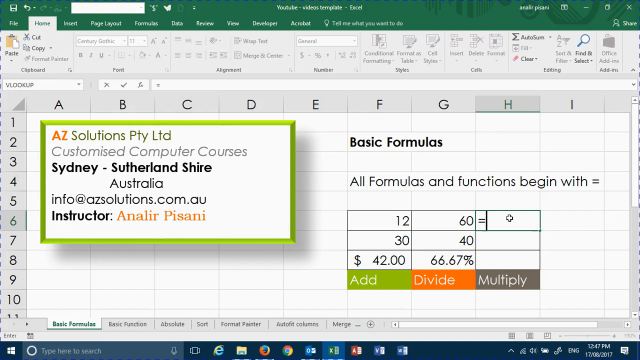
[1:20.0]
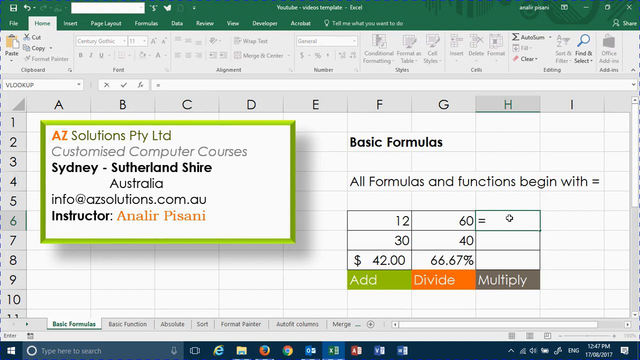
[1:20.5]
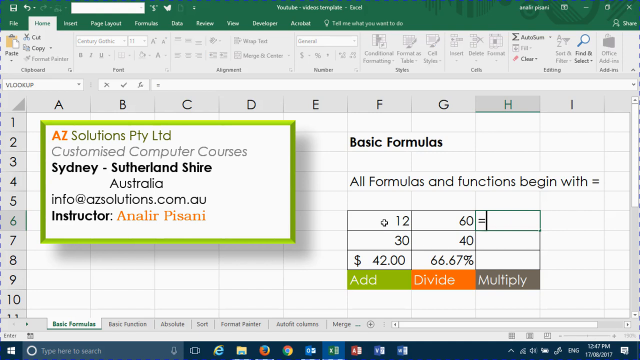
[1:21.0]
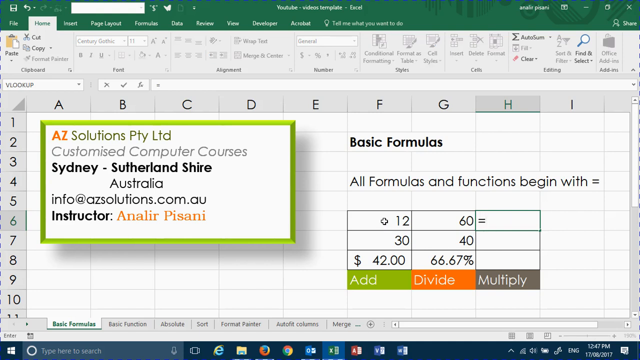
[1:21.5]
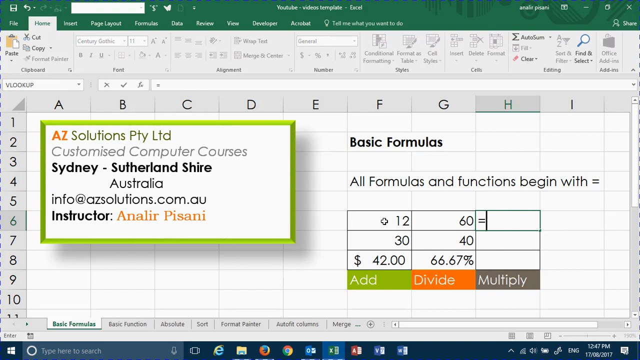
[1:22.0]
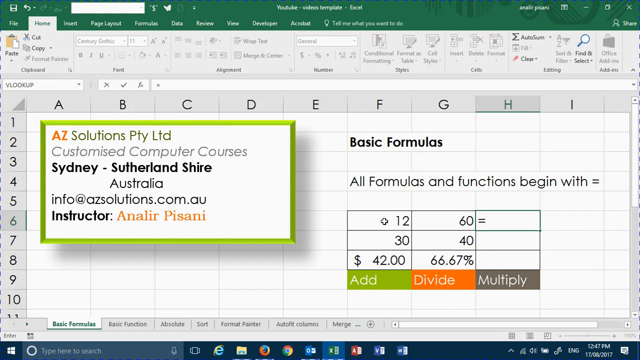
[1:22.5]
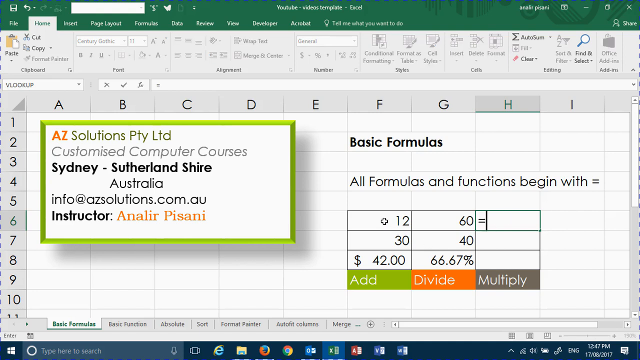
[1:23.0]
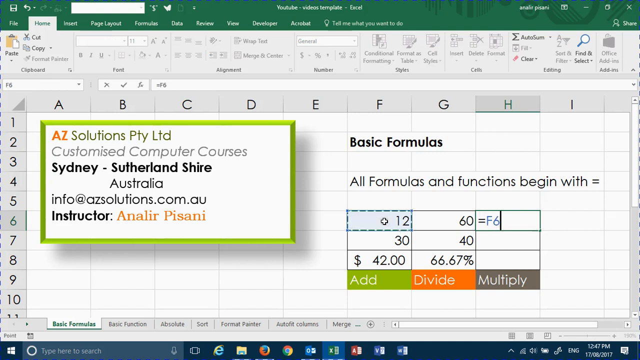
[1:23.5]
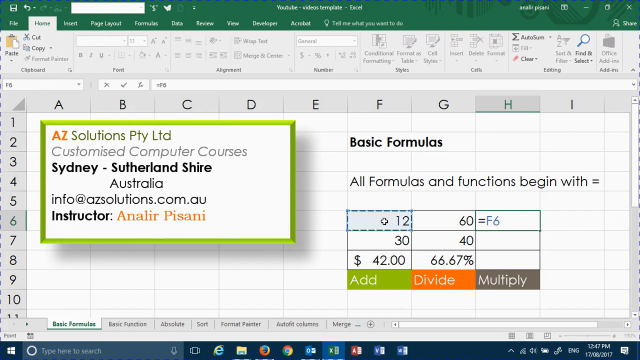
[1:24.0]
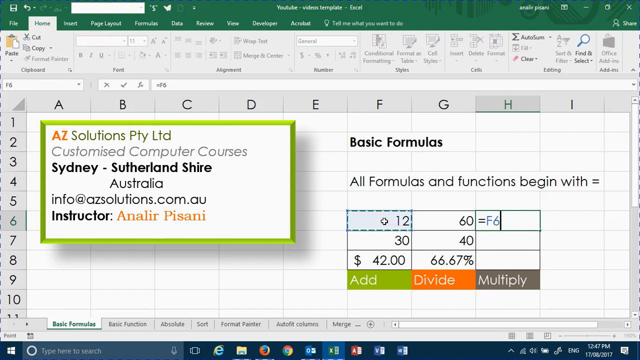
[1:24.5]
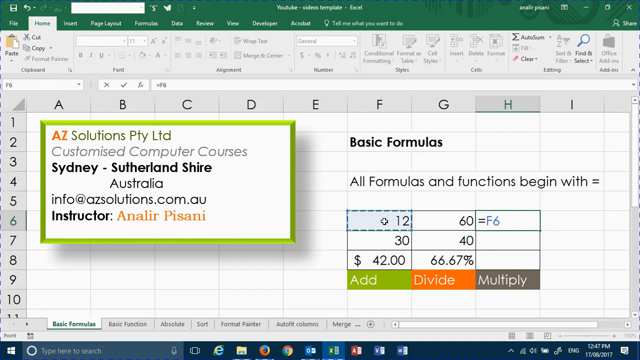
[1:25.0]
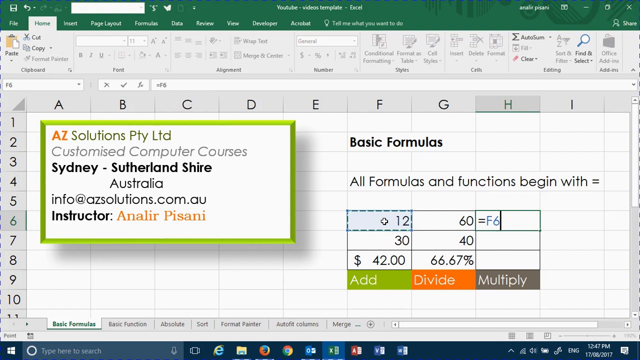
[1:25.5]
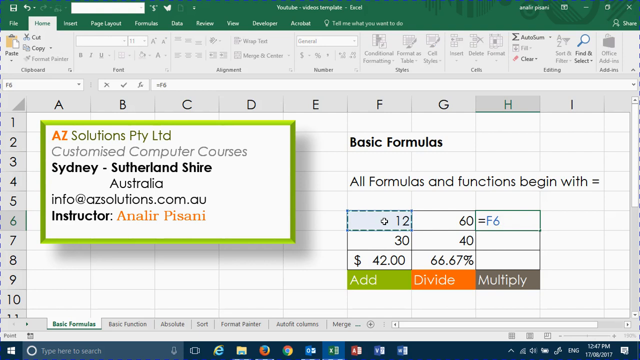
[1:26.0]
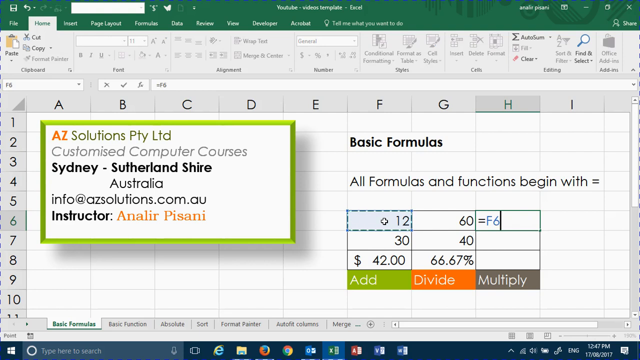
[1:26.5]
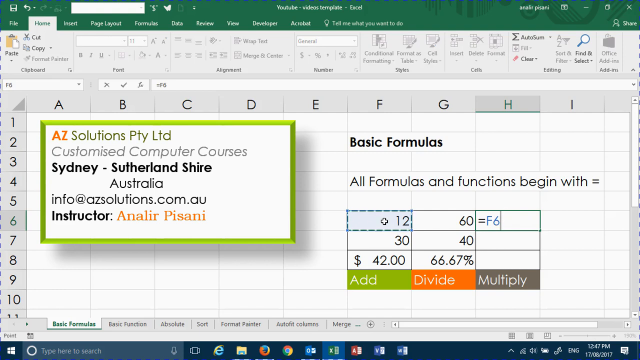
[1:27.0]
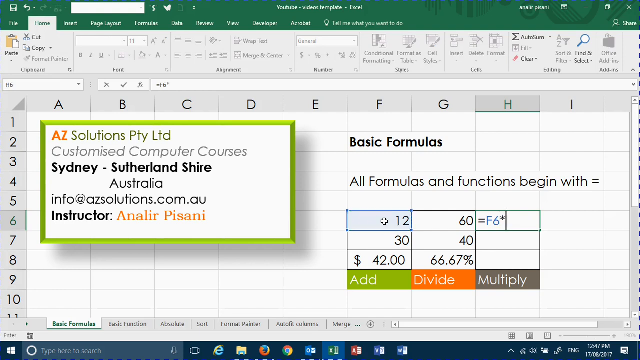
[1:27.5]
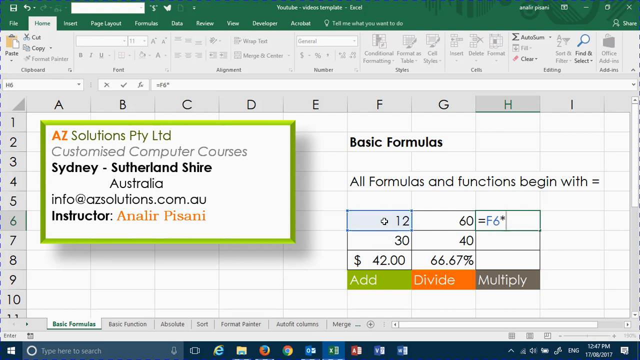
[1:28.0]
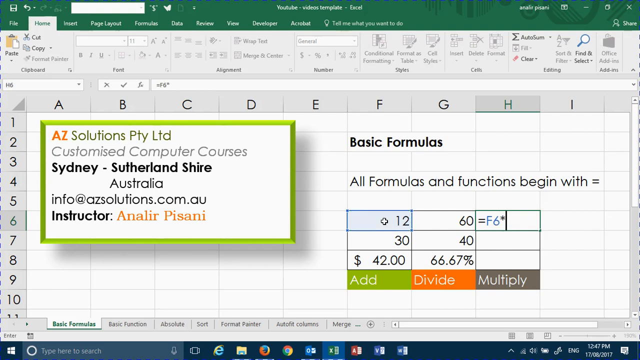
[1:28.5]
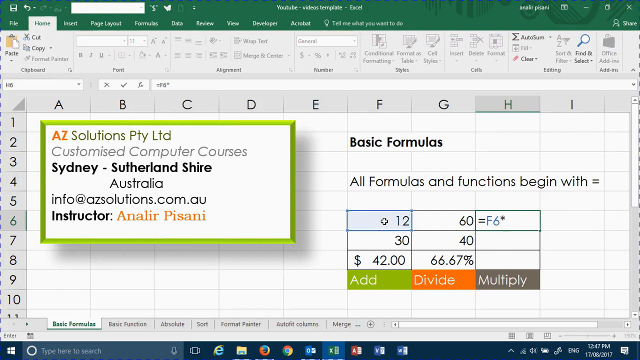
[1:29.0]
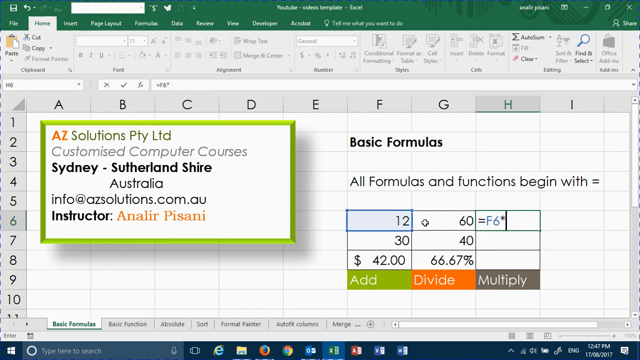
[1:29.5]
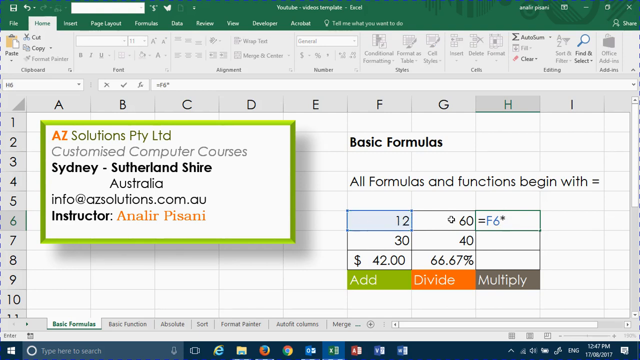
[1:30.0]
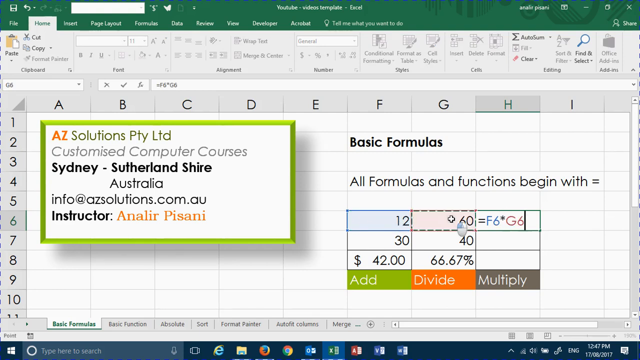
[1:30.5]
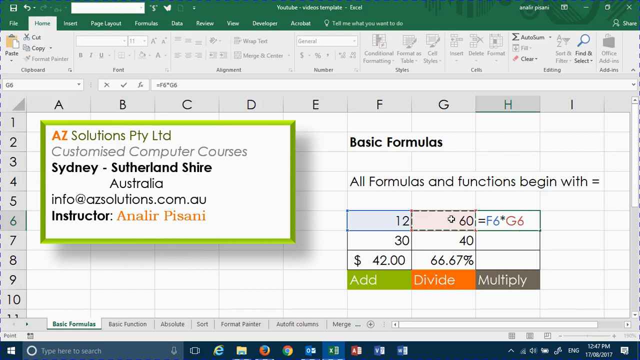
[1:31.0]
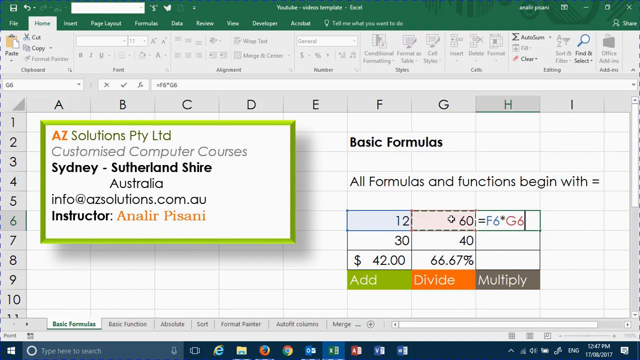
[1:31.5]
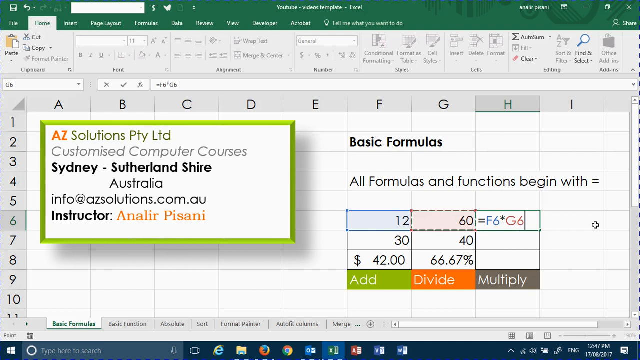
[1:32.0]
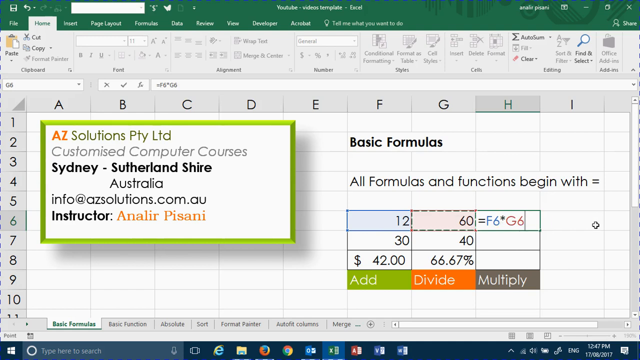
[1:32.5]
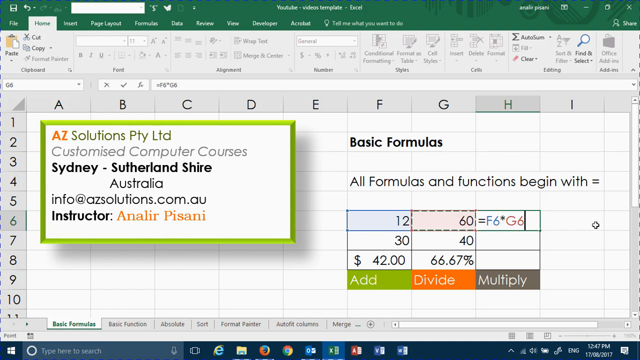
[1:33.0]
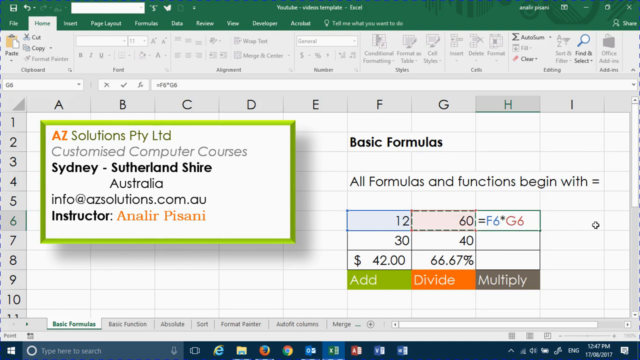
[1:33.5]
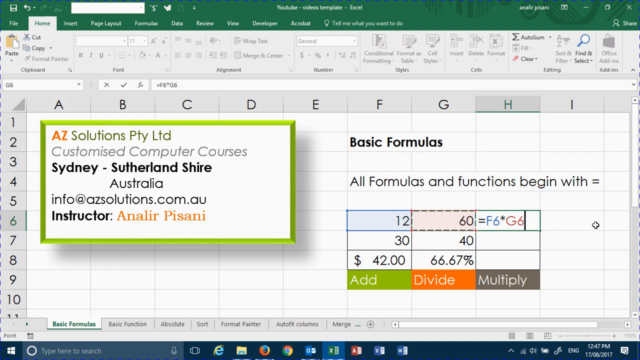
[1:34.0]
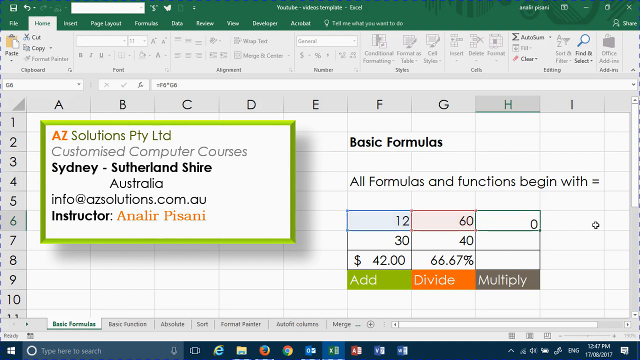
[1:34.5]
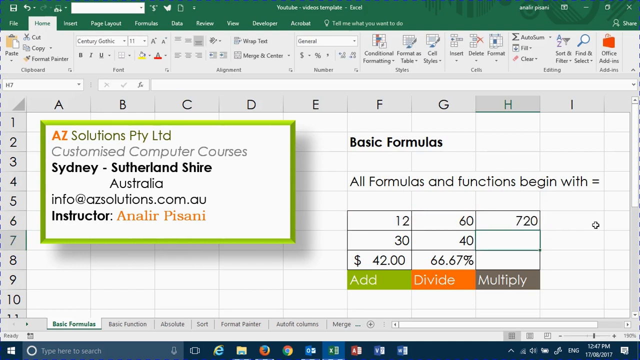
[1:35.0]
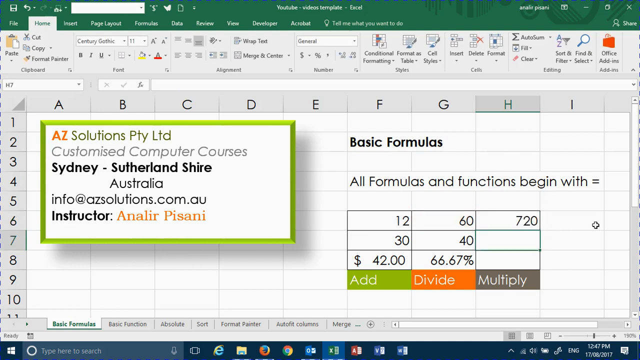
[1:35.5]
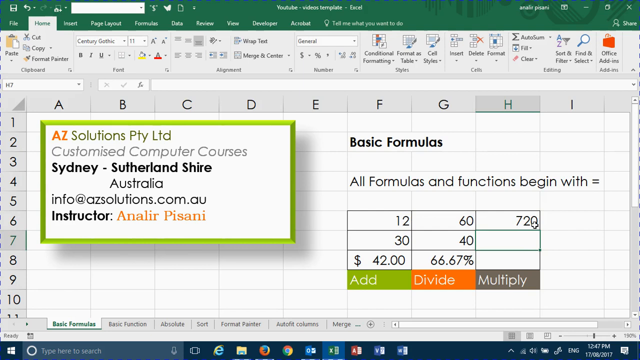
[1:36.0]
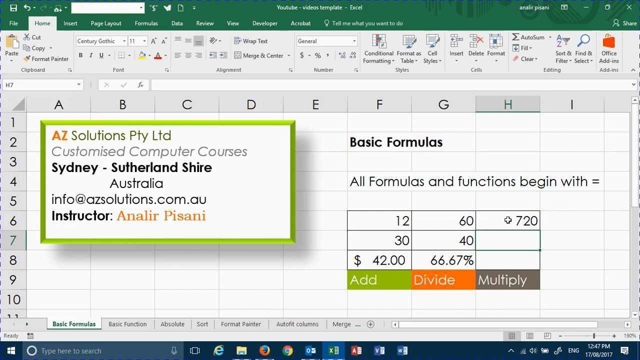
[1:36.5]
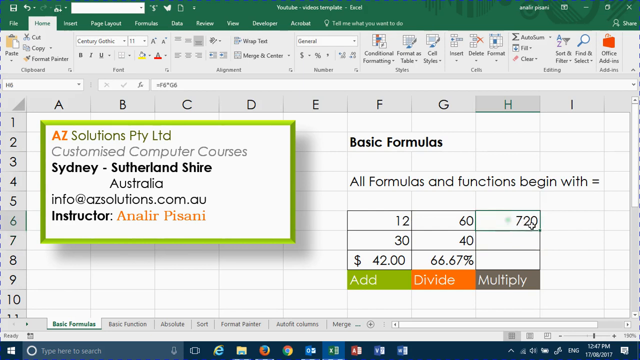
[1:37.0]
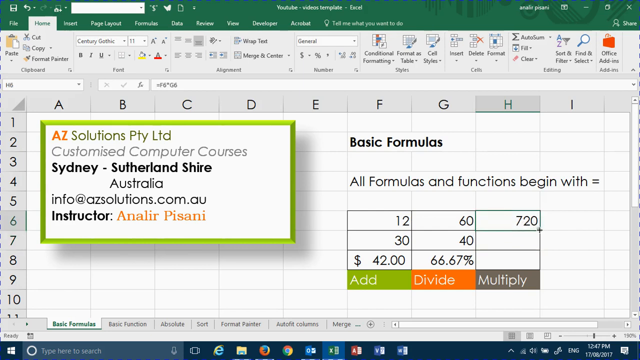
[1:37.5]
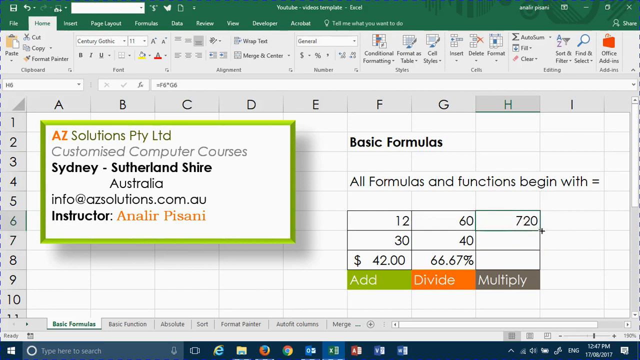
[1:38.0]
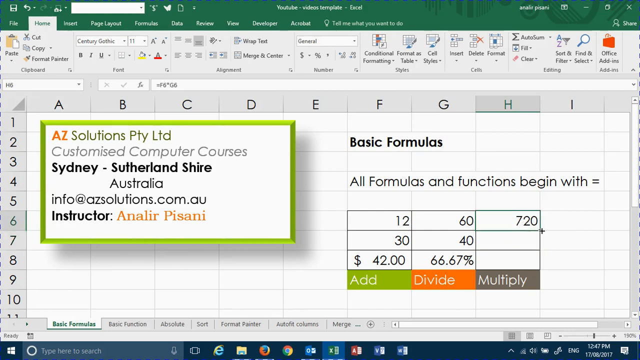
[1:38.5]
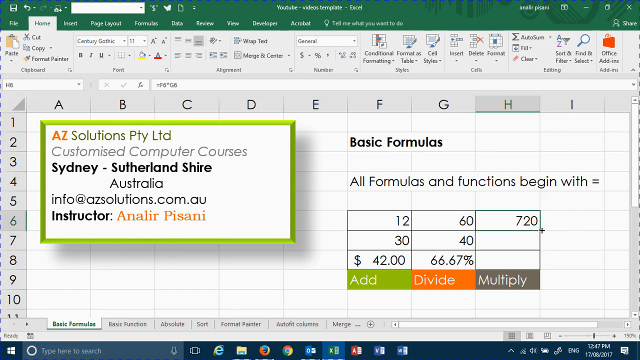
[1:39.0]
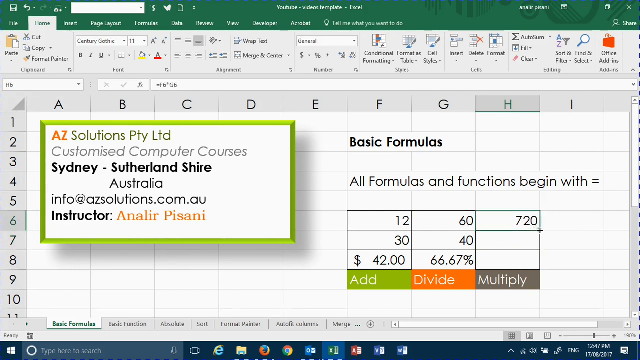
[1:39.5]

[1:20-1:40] An equal sign is entered in column H, row 6. Column F, row 6 appears to be clicked, making the formula equals F6. A star is inserted for multiplication, and then column G, row 6 is clicked, creating the formula F6 times G6. Cell H6 then appears to be clicked, and the result is 720.